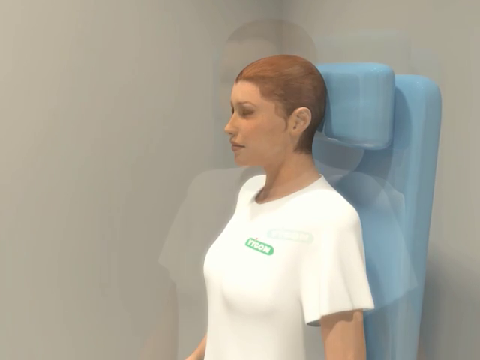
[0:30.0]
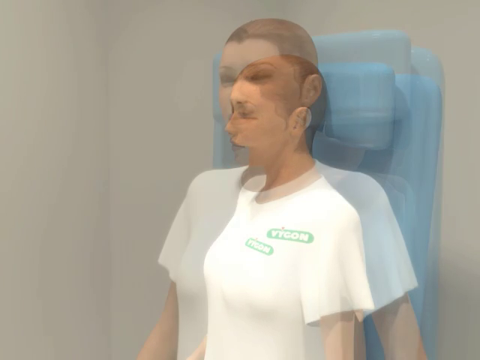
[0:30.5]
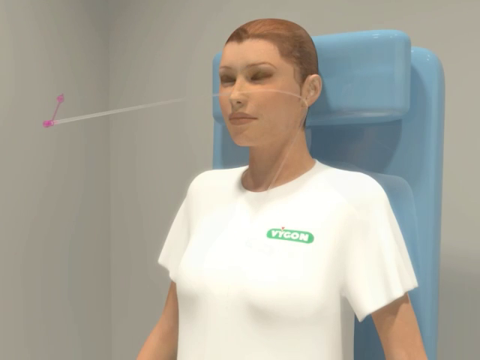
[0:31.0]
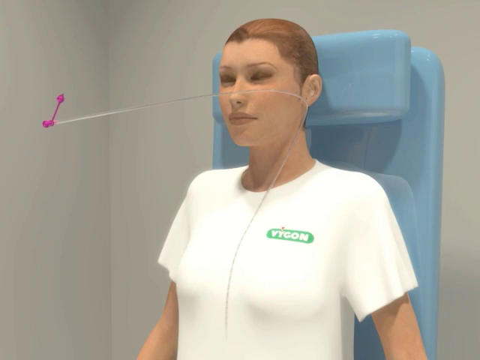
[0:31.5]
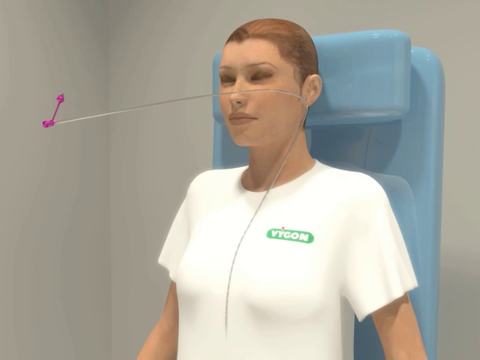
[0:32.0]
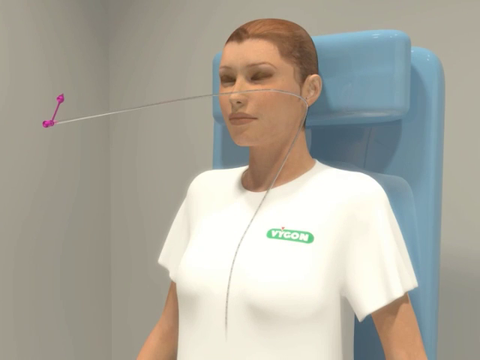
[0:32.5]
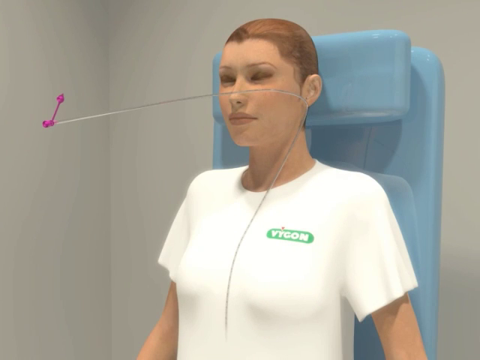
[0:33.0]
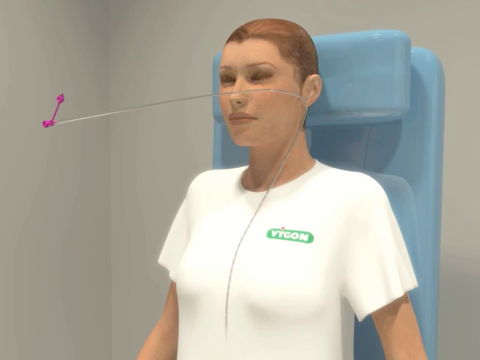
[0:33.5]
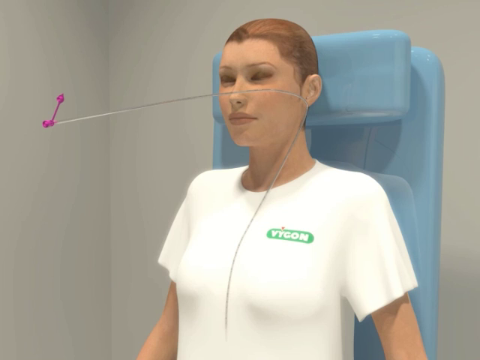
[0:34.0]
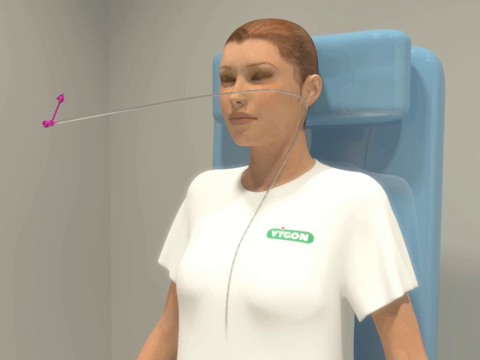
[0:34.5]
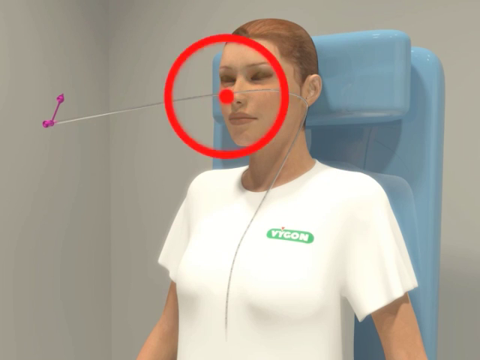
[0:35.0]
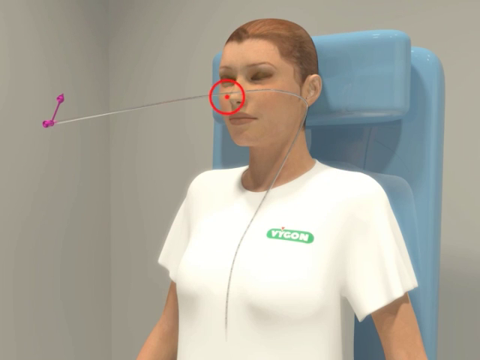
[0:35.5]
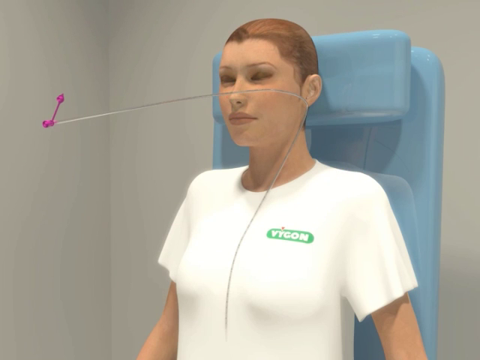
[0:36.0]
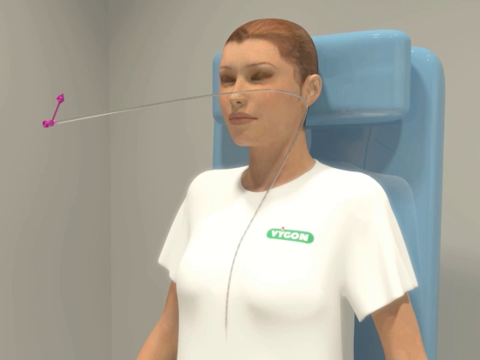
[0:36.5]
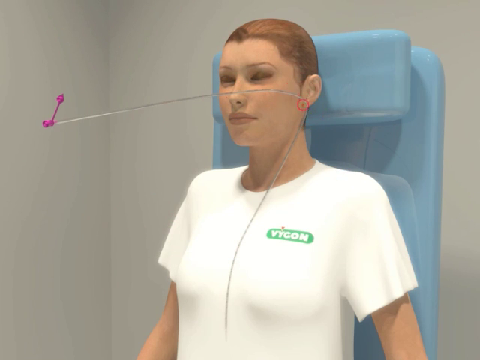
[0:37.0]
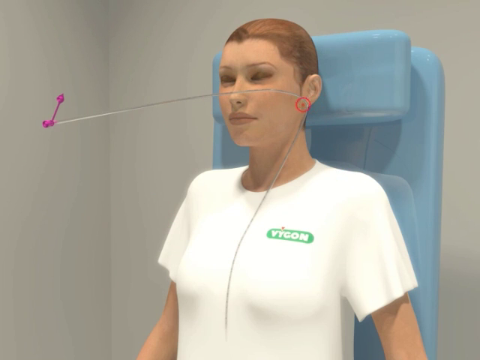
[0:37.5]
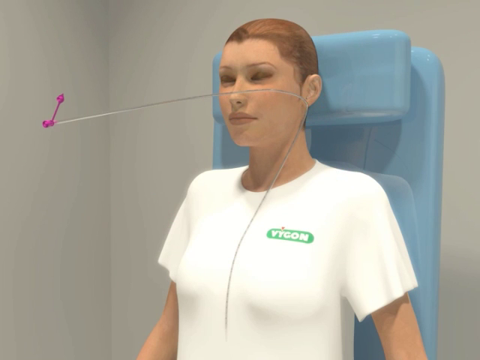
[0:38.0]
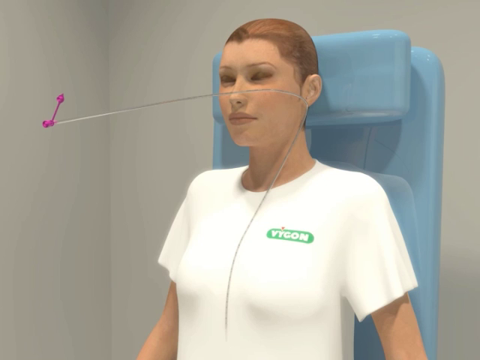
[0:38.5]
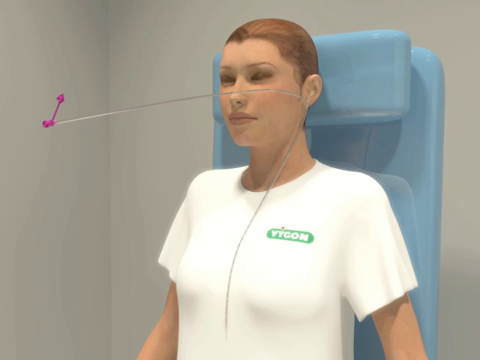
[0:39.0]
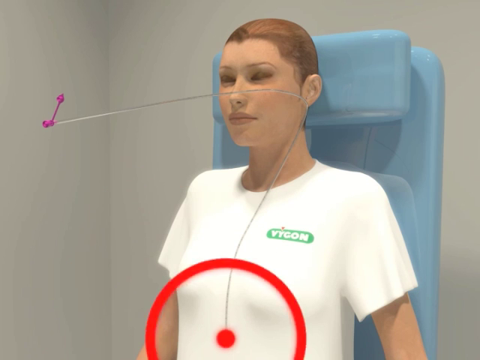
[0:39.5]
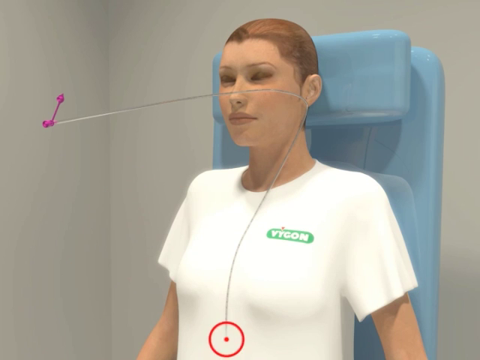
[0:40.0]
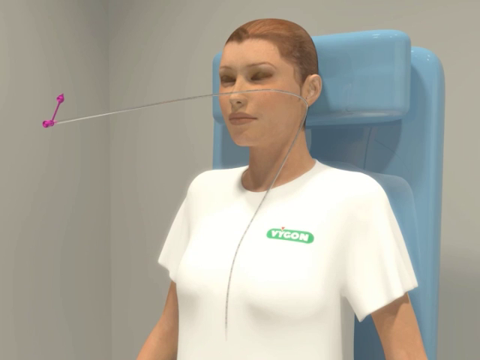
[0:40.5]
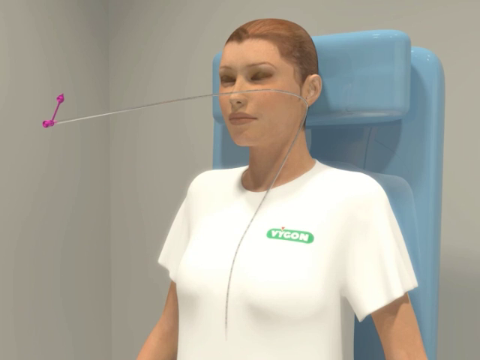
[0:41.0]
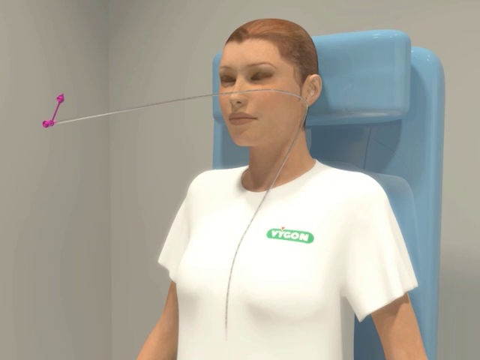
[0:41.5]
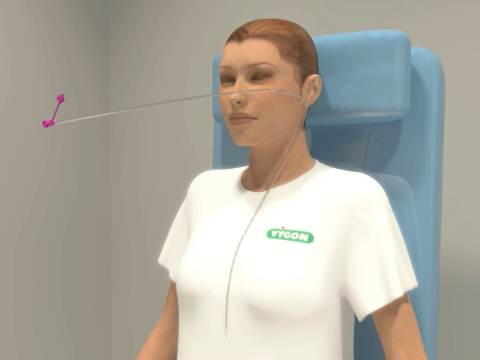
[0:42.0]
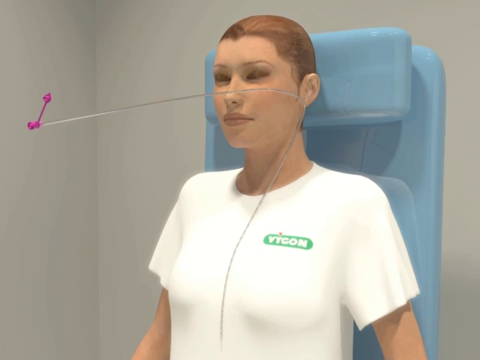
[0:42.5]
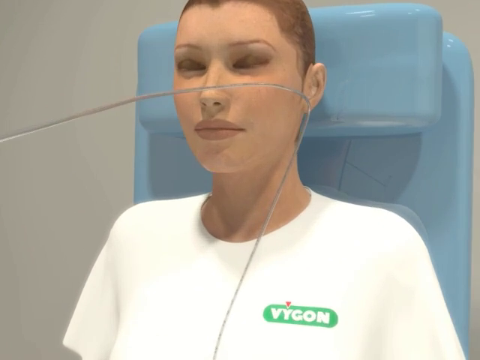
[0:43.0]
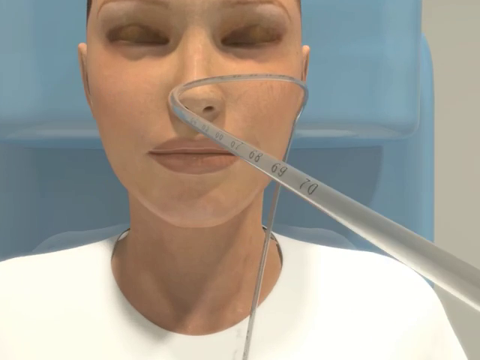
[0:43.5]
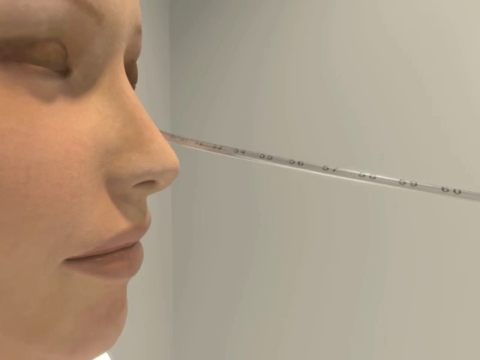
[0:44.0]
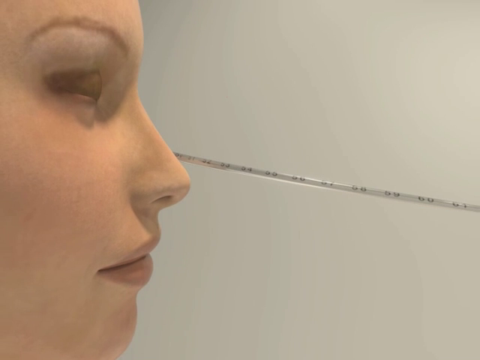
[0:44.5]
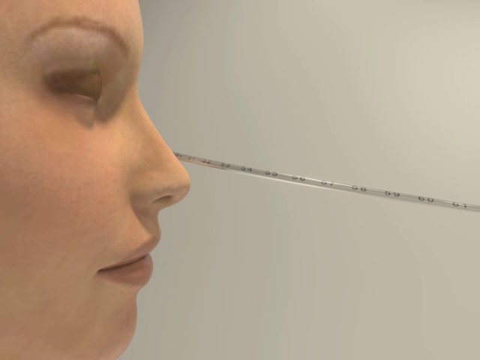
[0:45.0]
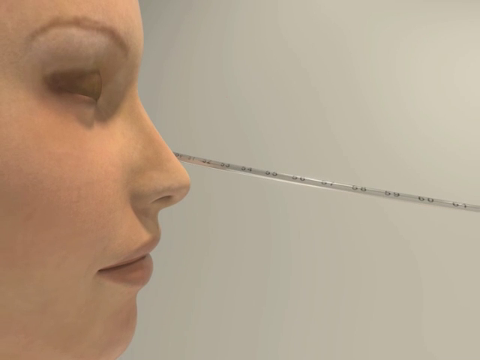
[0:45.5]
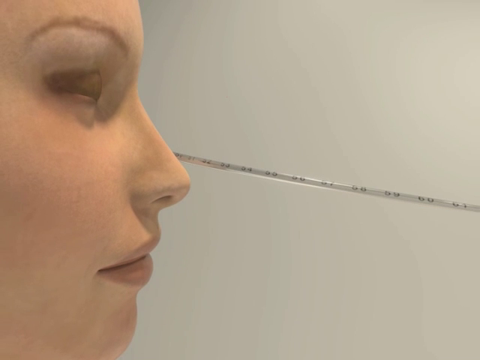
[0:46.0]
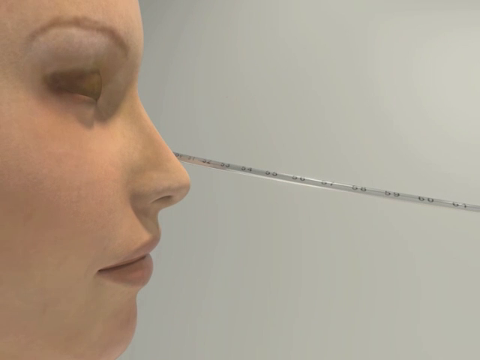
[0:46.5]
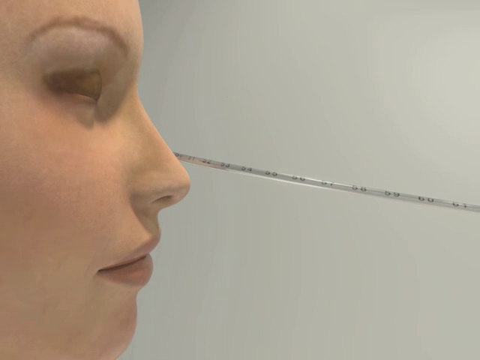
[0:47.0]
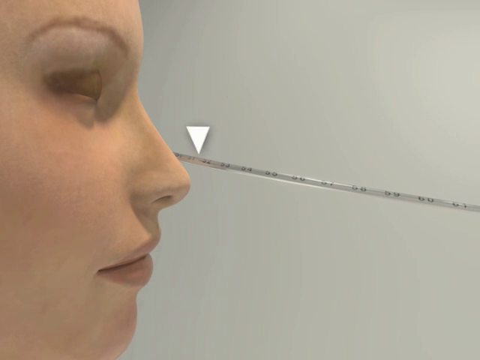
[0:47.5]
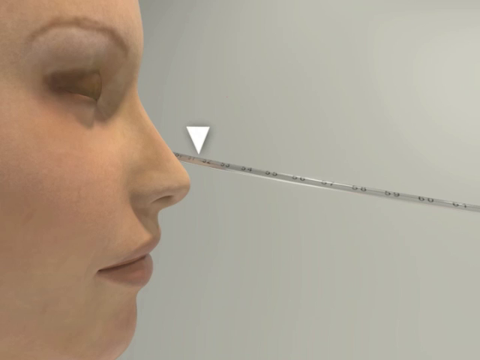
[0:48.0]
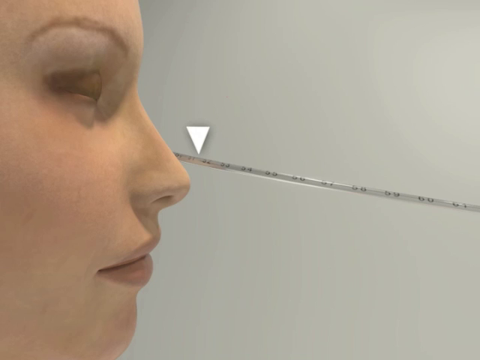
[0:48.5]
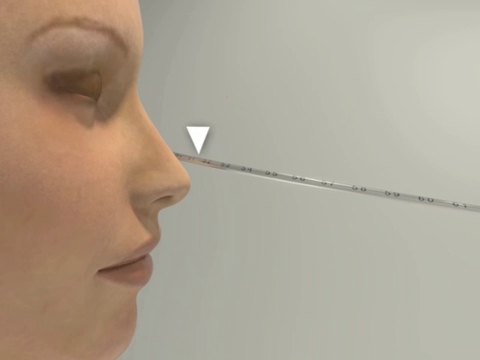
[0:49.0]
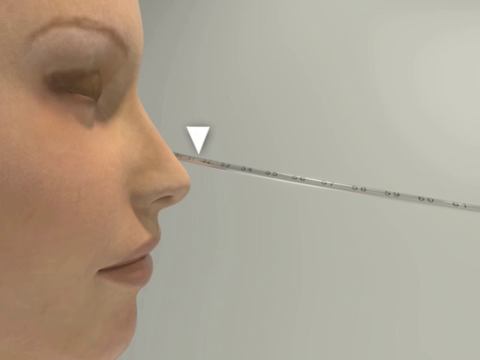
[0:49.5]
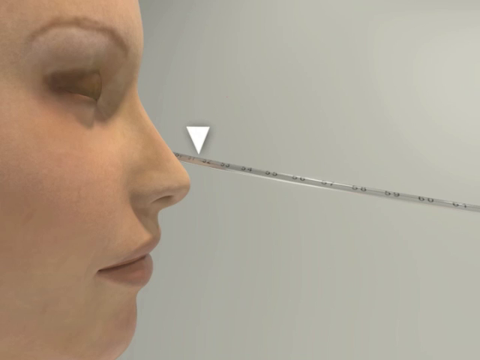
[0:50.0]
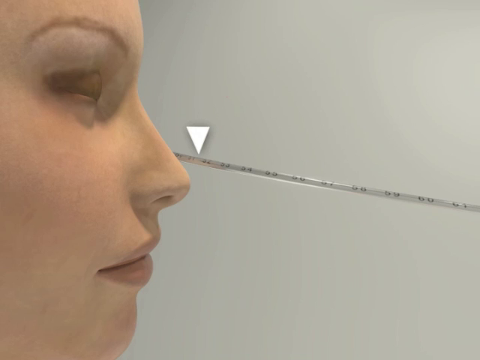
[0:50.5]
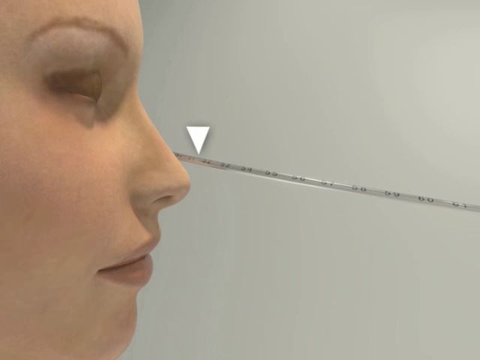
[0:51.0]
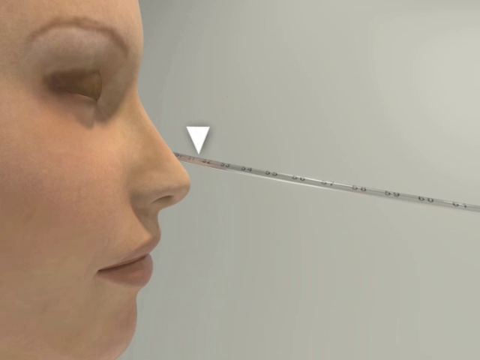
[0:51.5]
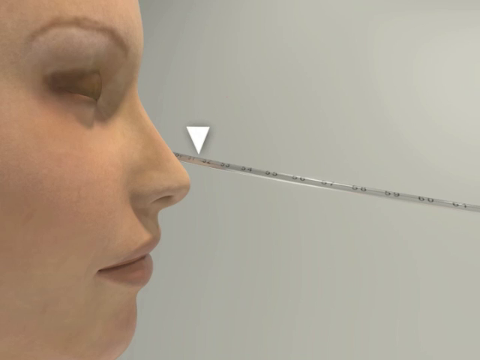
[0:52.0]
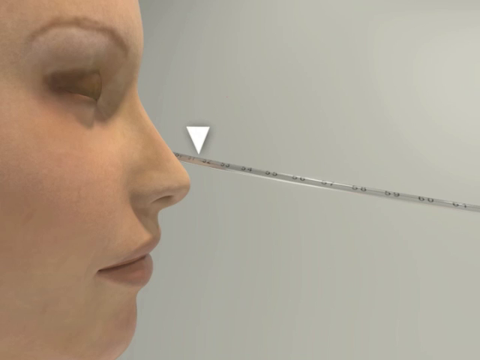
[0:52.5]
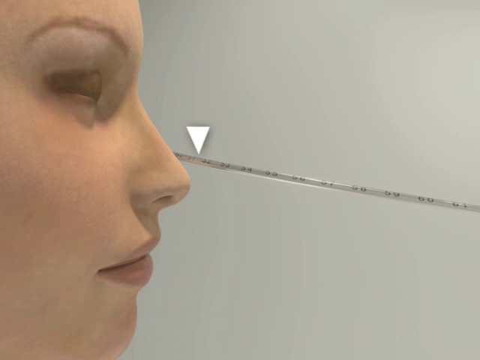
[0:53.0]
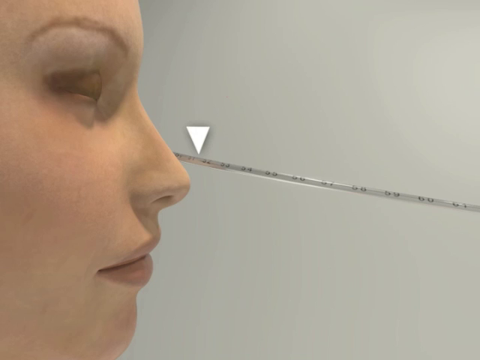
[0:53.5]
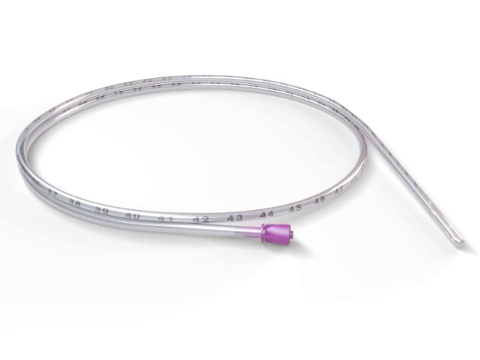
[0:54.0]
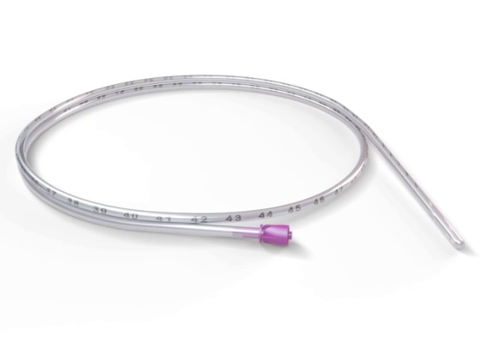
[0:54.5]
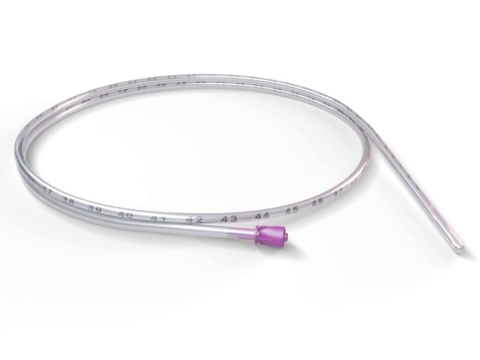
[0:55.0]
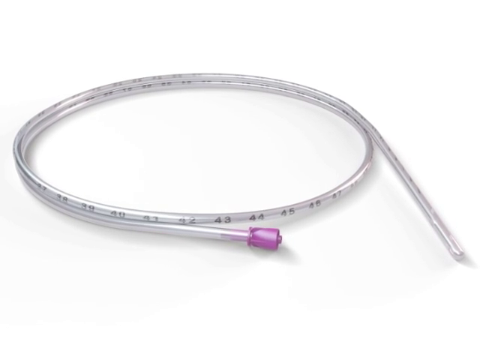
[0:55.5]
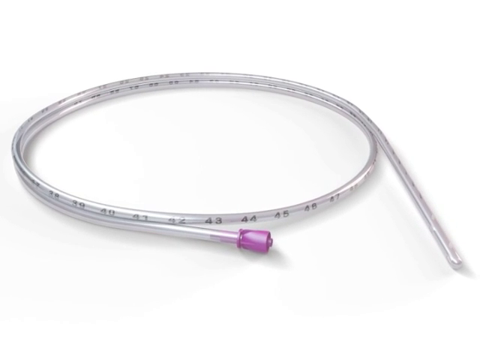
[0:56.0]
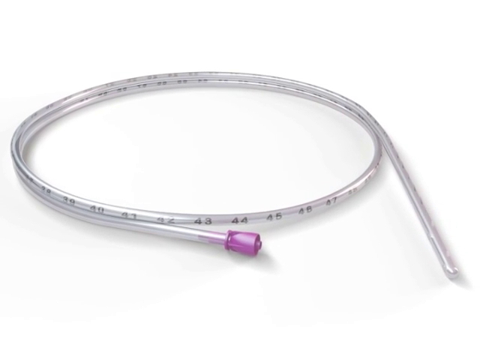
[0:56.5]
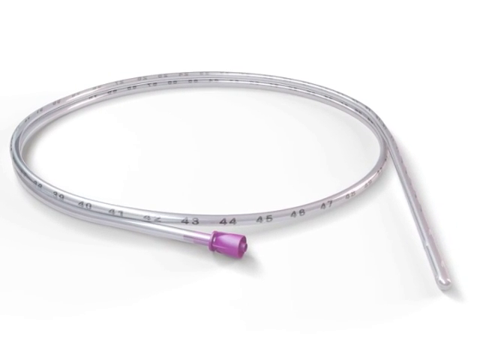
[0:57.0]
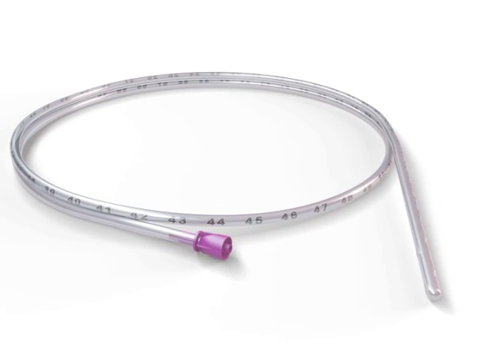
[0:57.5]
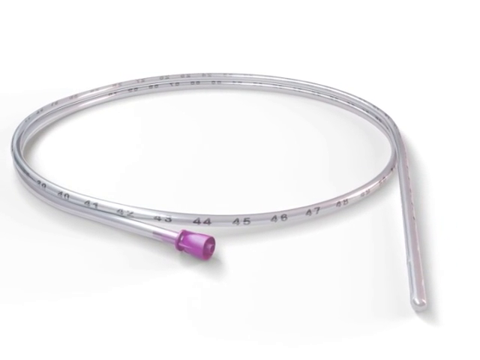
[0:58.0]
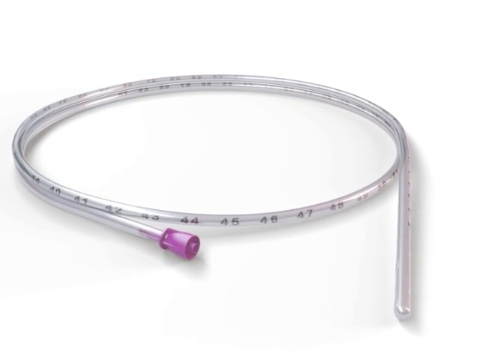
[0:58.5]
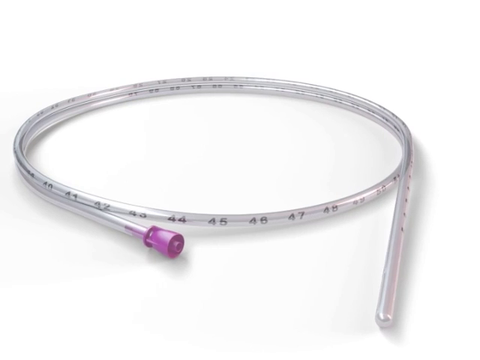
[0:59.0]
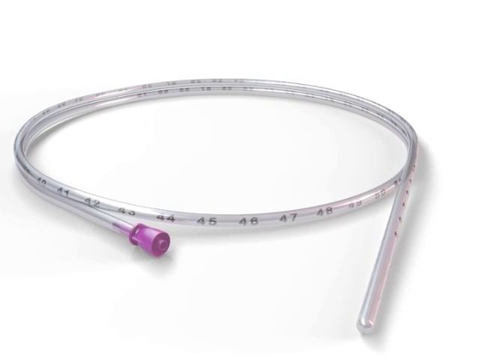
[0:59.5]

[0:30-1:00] The patient, wearing a white shirt with the Vygon logo at the top left, lies on a blue rubber bed and rotates to the left. A long, clear tube appears across the patient's chest and face; attached to its end is something pink that looks like it has an arrow on the tip. A red dot with a red circle around it appears approximately on the patient's nose, then disappears. Another red dot with a circle around it appears at the patient's left earlobe, starting large and getting smaller. Finally, a red dot with a red circle around it appears near the patient's stomach. The video zooms in and the patient rotates a little to the right, giving a close-up of the clear tube, which has black numbers on it. The right side of the patient's face is visible as the tube extends into the distance, and a white arrow points to a number on the tube.